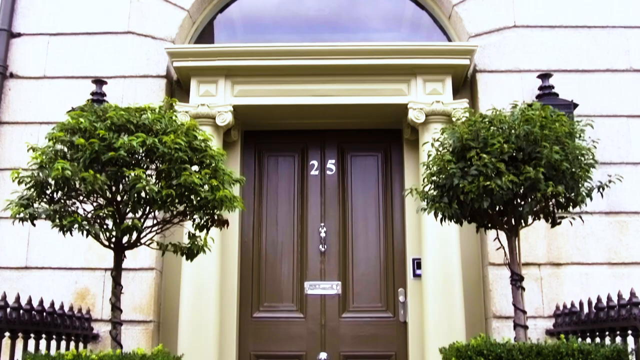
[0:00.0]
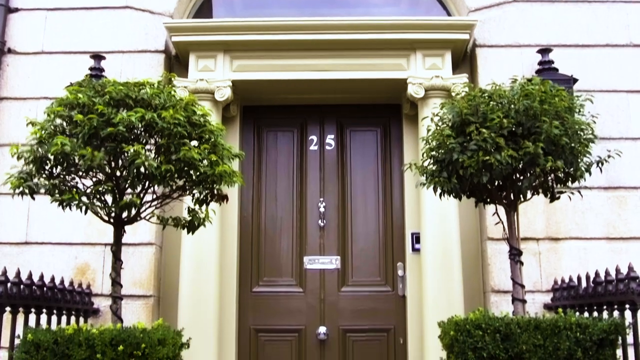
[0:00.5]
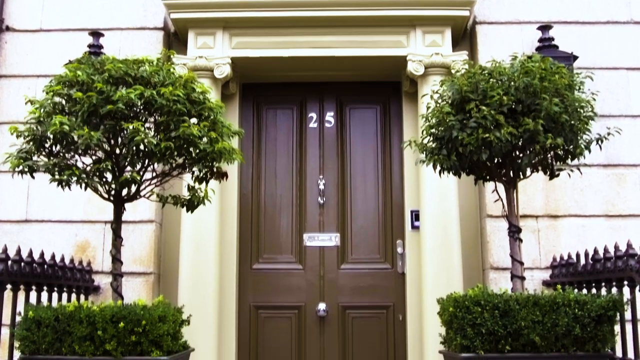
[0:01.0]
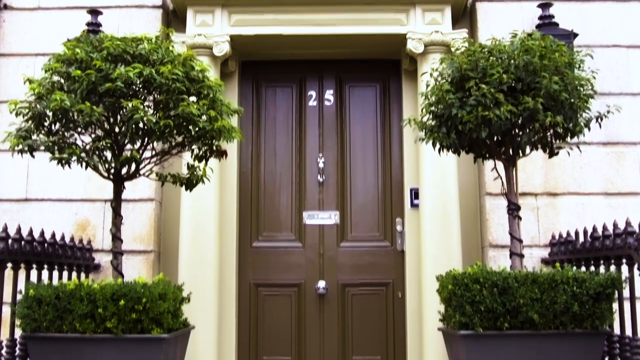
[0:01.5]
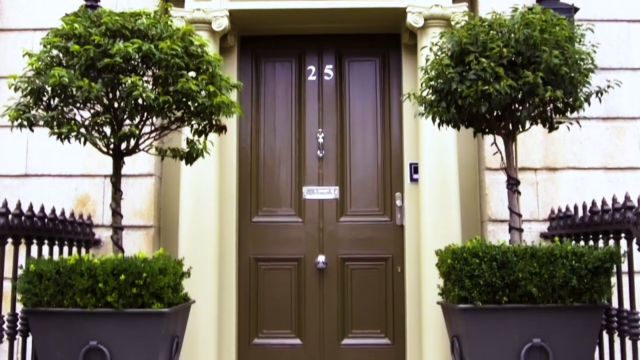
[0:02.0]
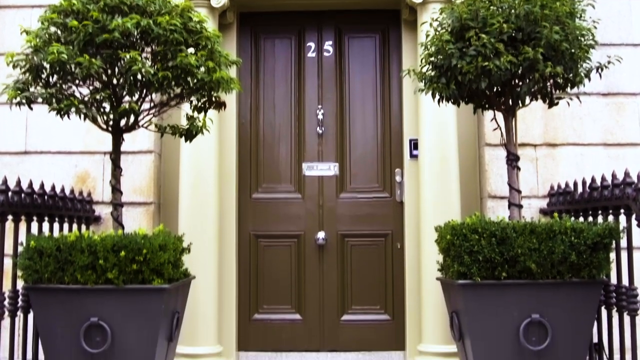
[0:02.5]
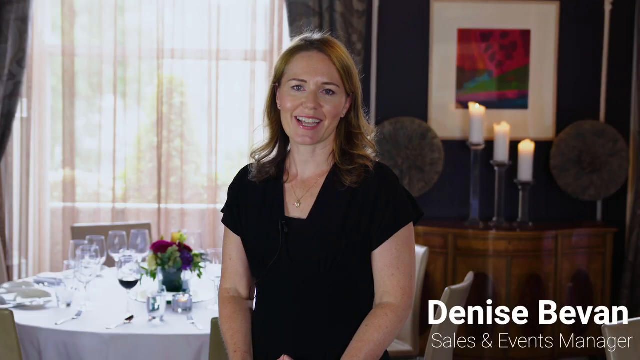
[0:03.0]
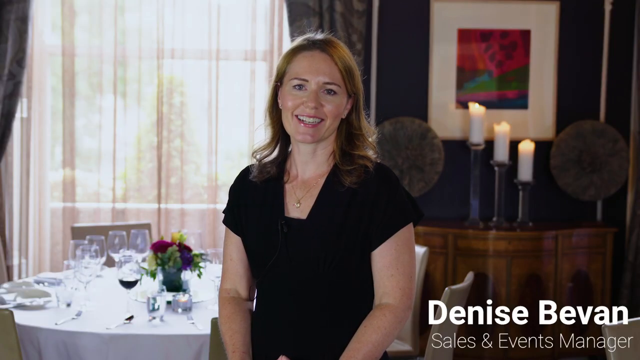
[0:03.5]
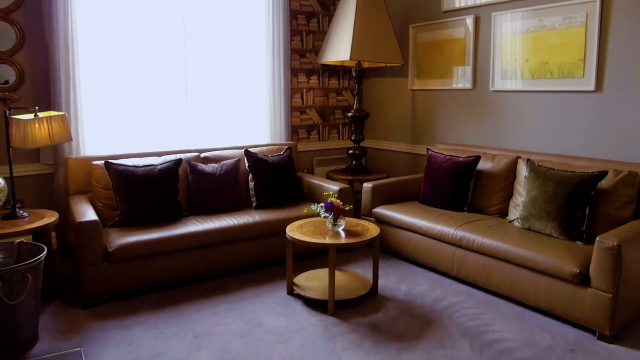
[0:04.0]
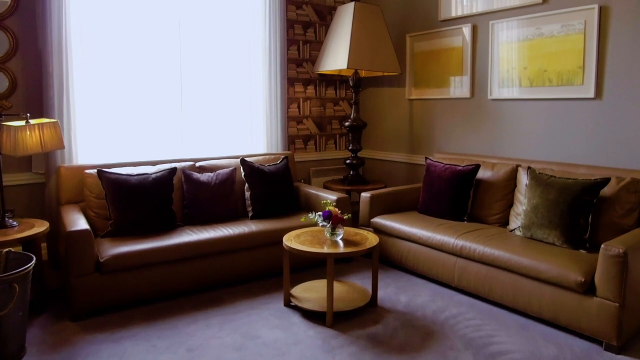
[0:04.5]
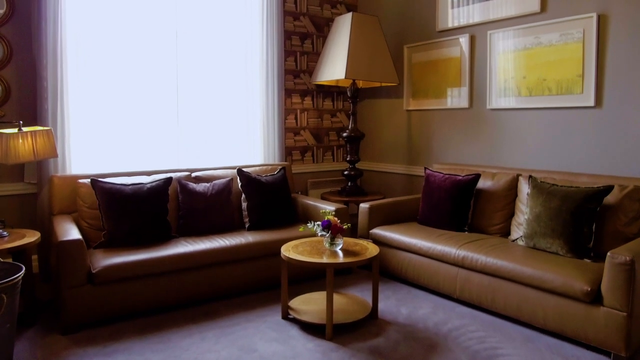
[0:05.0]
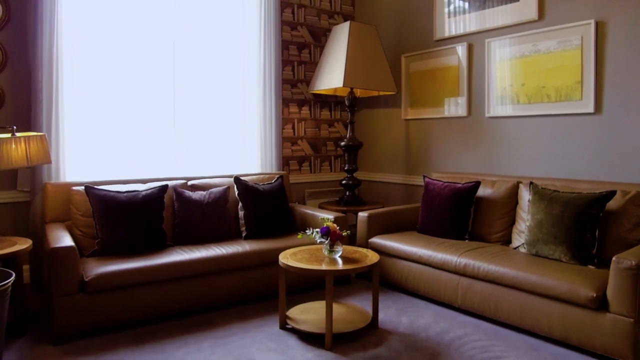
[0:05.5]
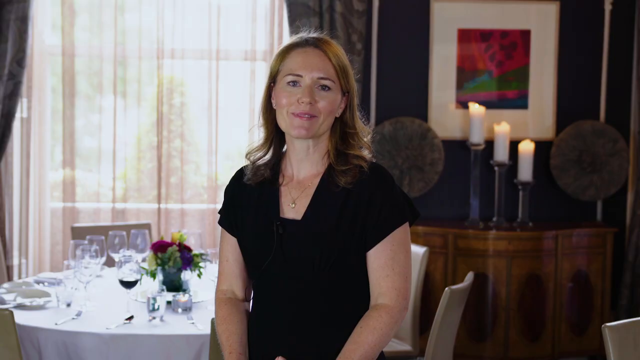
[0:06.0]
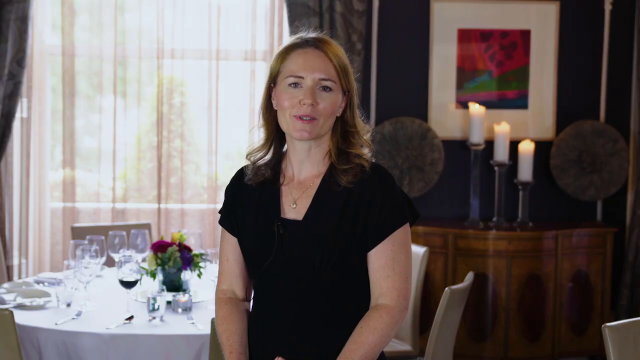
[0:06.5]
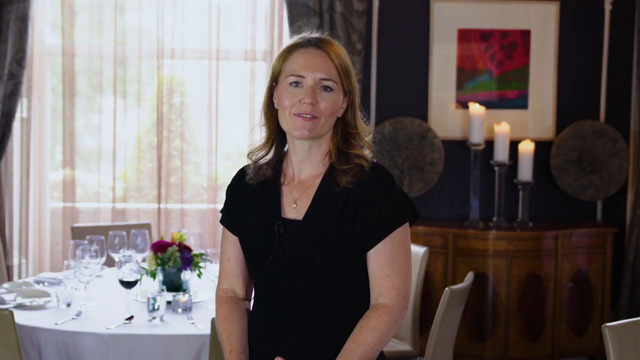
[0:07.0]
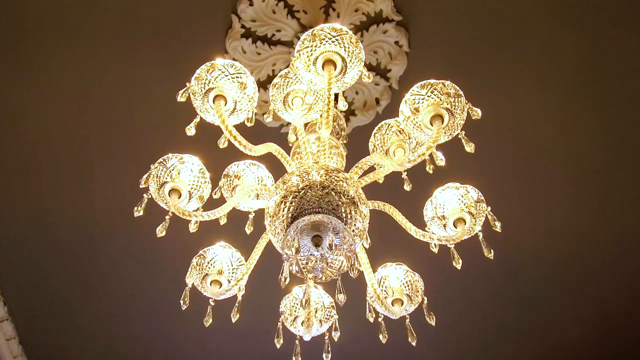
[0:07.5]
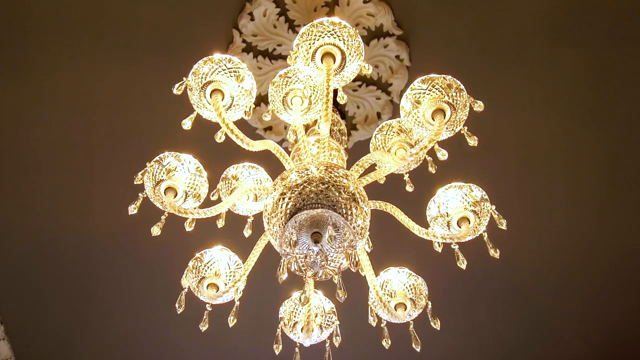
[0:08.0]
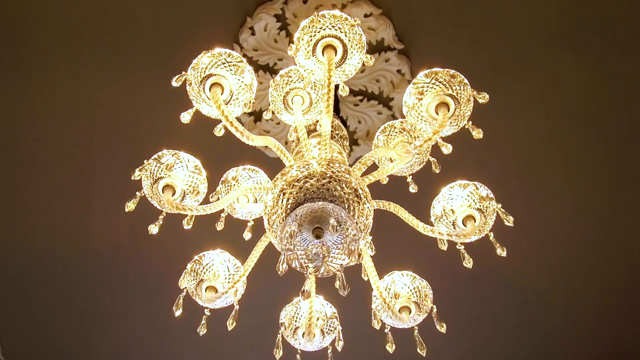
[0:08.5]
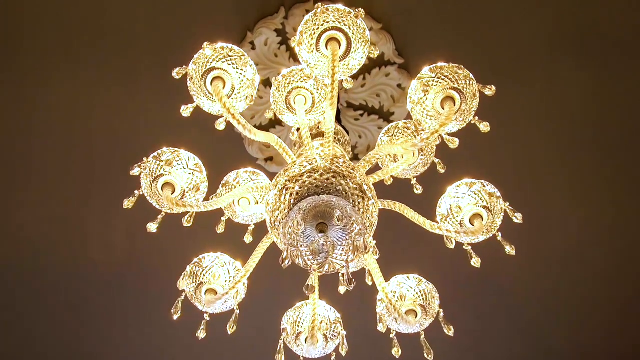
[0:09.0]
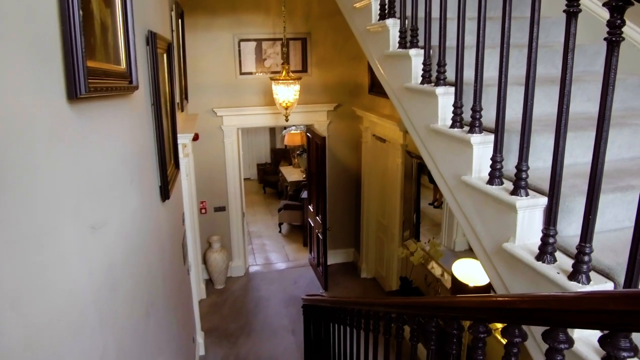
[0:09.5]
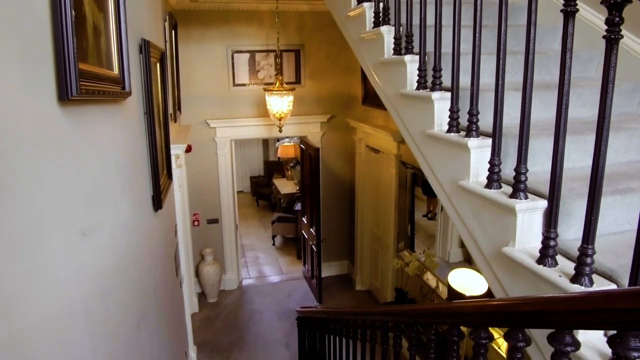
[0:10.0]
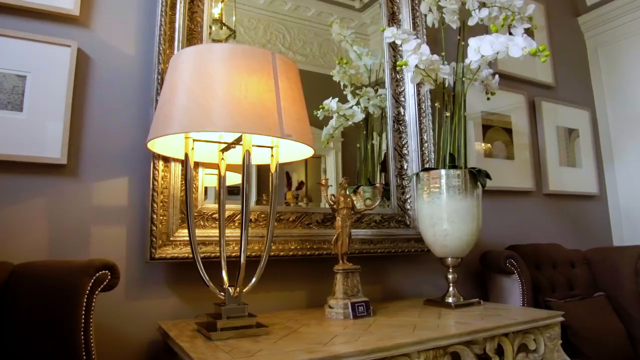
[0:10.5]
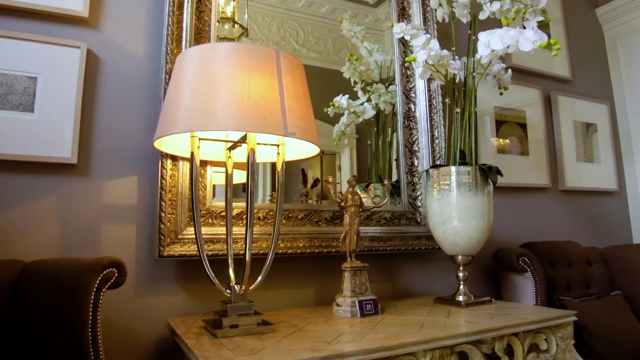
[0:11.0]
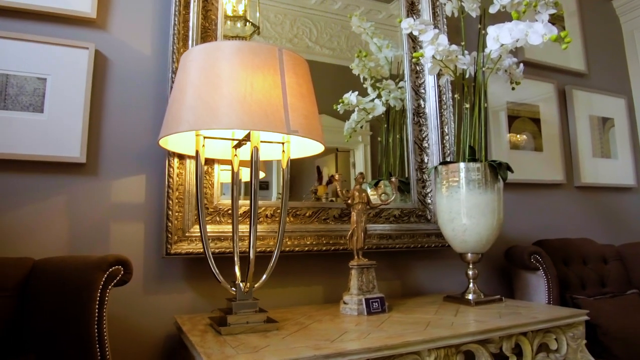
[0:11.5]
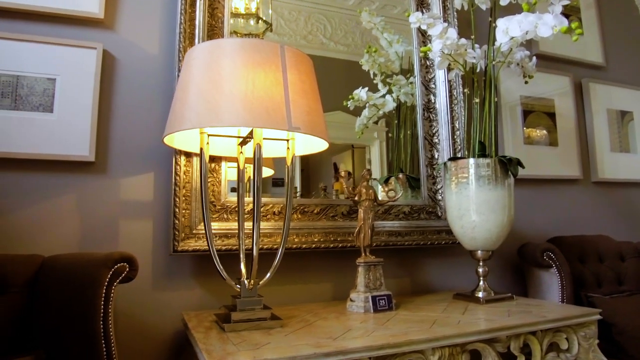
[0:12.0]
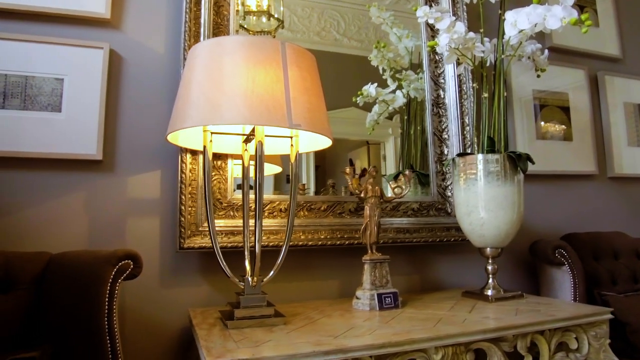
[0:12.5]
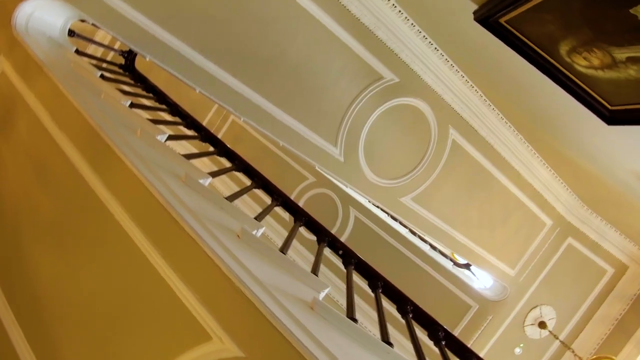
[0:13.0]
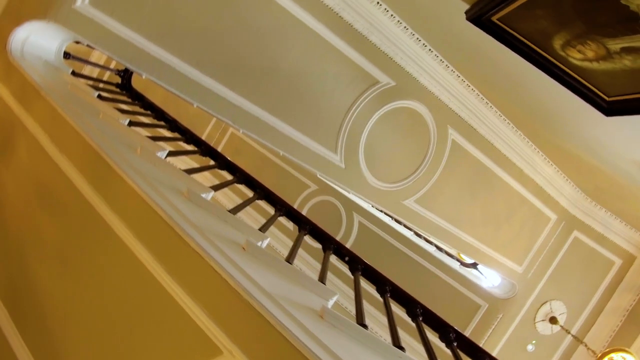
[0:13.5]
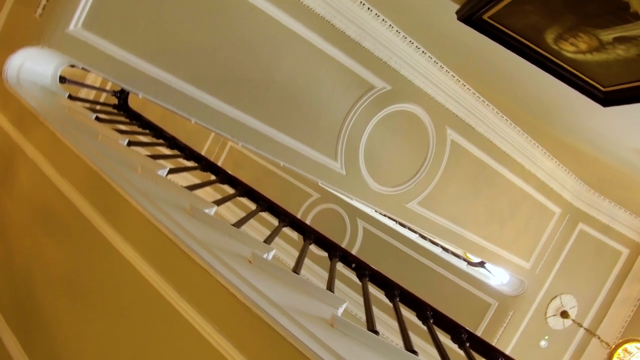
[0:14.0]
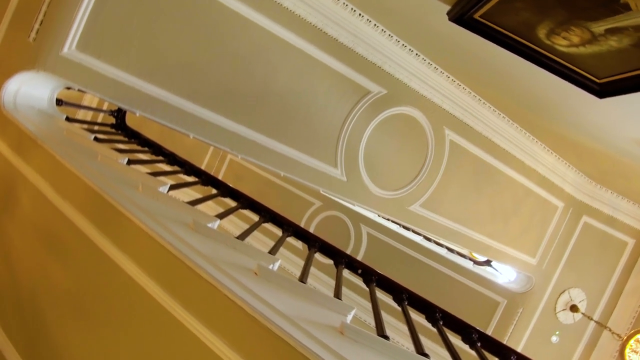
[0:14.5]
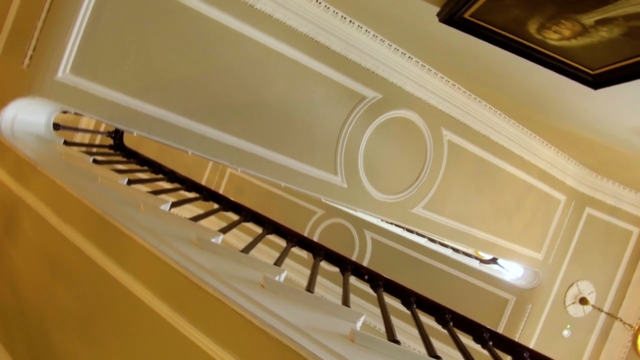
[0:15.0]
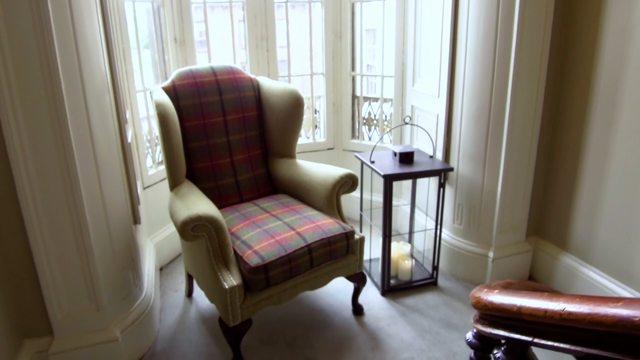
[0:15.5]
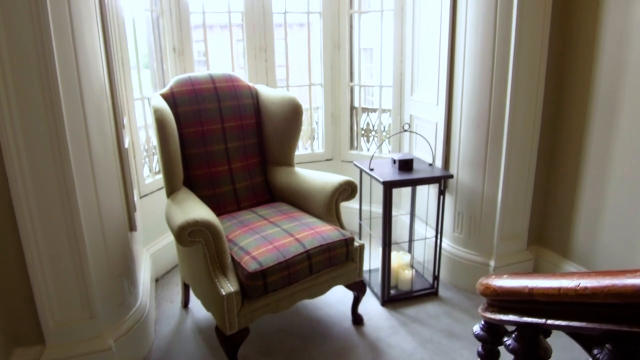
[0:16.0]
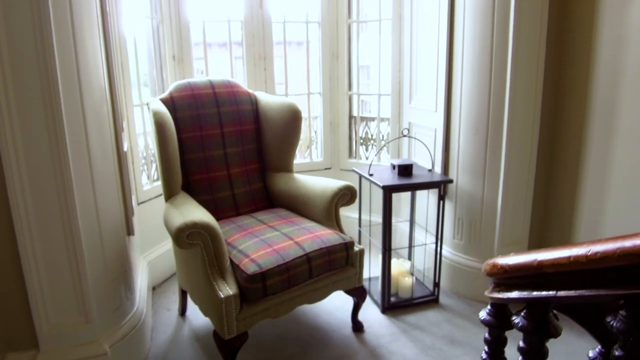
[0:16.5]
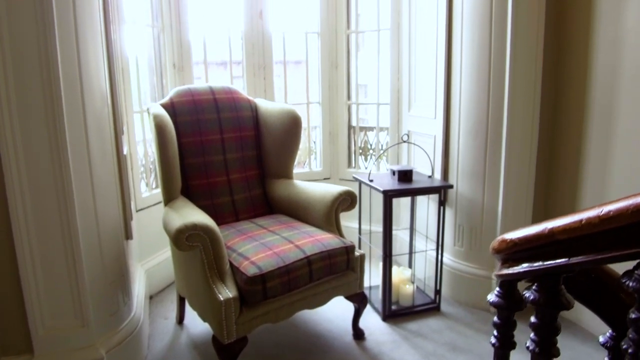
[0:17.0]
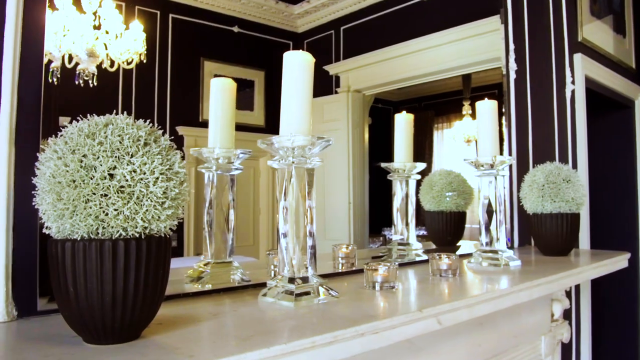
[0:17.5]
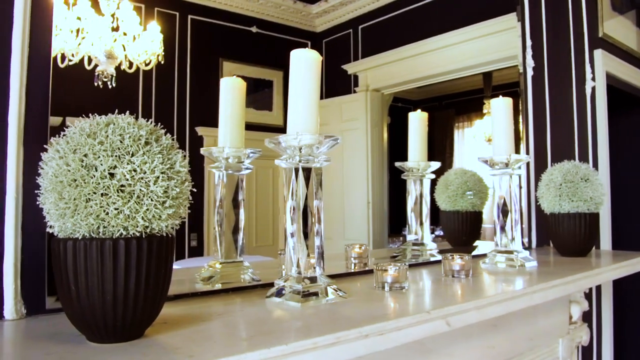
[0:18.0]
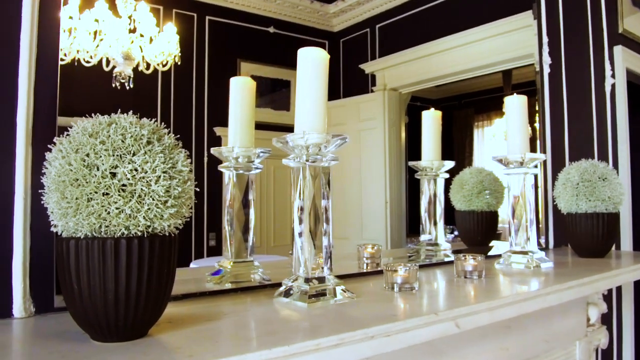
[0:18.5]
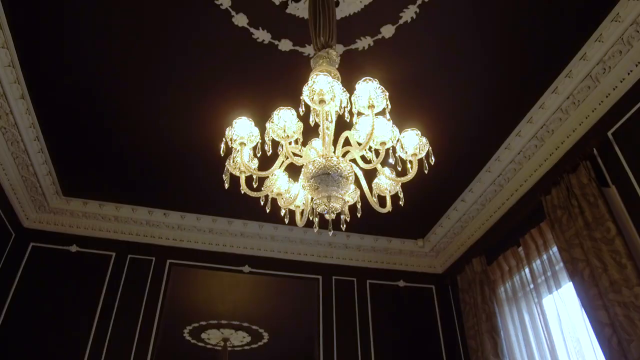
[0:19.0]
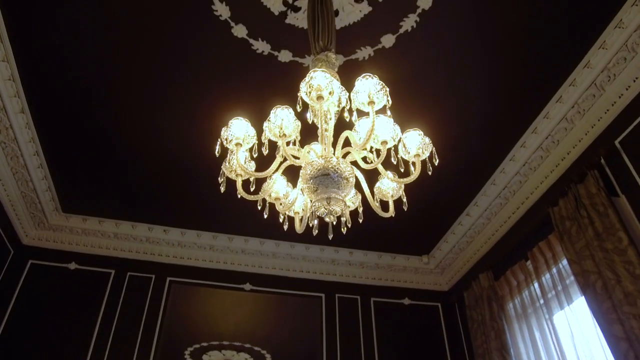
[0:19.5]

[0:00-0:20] The video shows what appears to be a brownstone, looking like a townhome for sale and like a historical building that has been around for a long time. The front door is wooden, brown double doors with the number 25 on it. A woman named Denise Bevon, the sales manager, hosts the video and shows a model of the home. A modestly furnished lounge or living area follows, with a brown leather couch, a circular coffee table, lampshades on the end tables, and a huge window behind the loveseat. Lighting fixtures and chandeliers appear. The layout looks like a split plan, and there are stairs that look like they are made of marble or limestone, with very fancy banisters. The house is furnished with light antiques in a very colonial-looking style. The ceiling has an elaborate design with something like a circle inside a rectangle, in a butternut color with white trim. The lighting is very fancy, and the interior looks very expensive, while from the outside the building looks like a townhome.